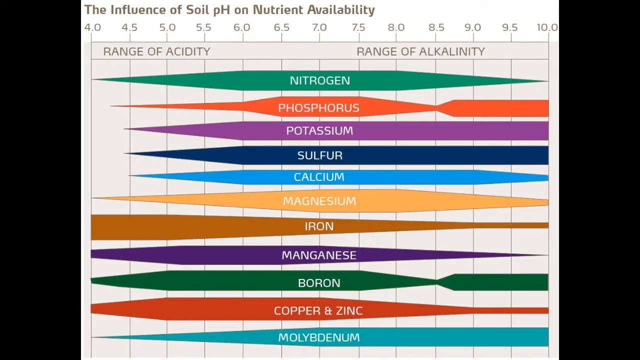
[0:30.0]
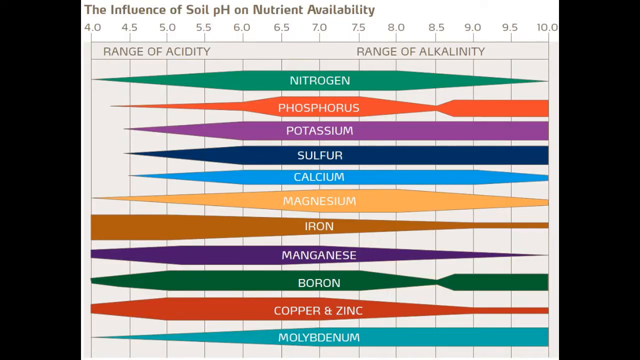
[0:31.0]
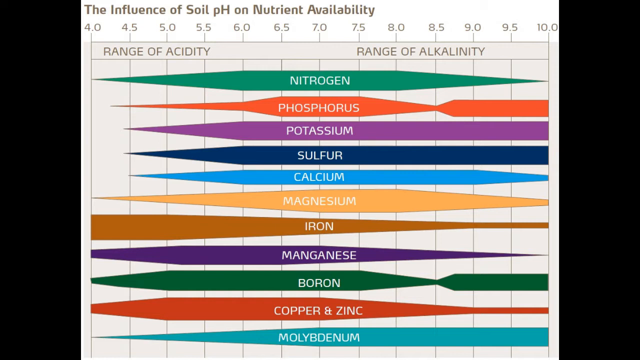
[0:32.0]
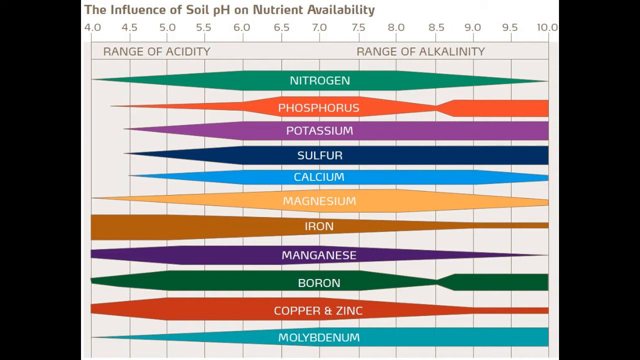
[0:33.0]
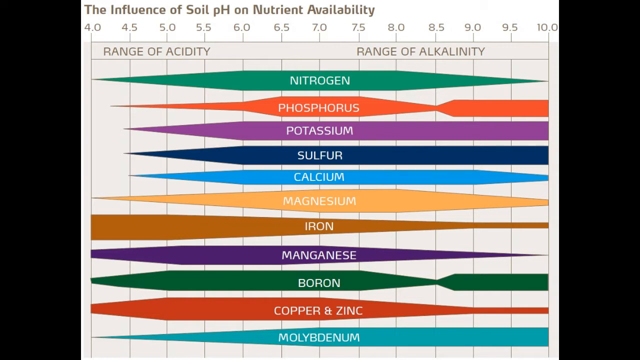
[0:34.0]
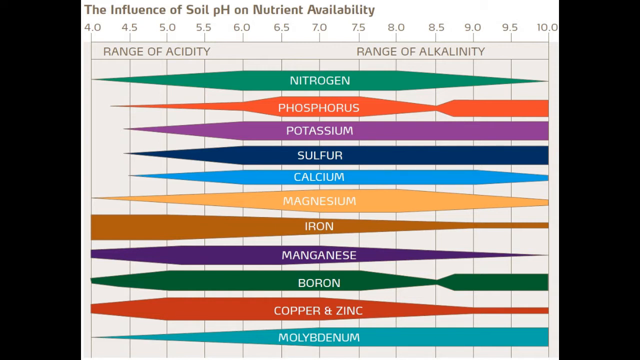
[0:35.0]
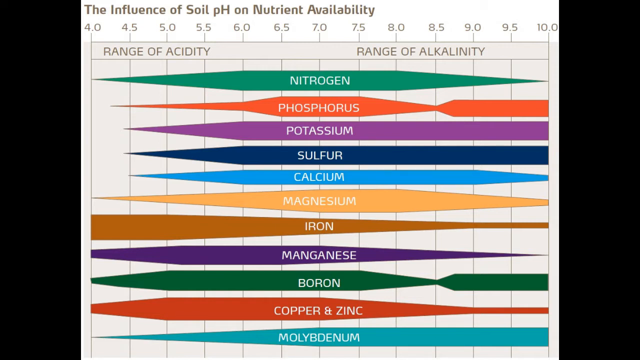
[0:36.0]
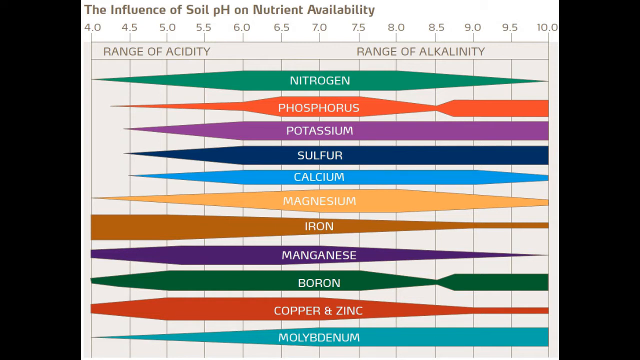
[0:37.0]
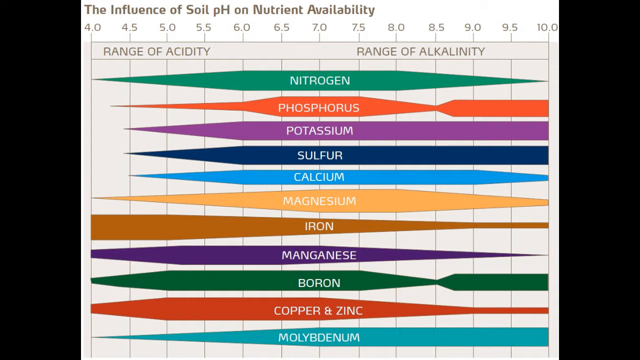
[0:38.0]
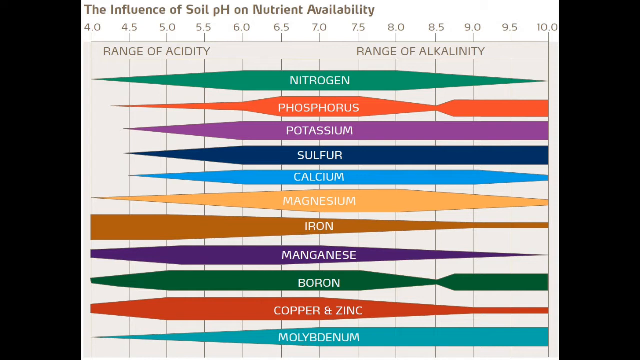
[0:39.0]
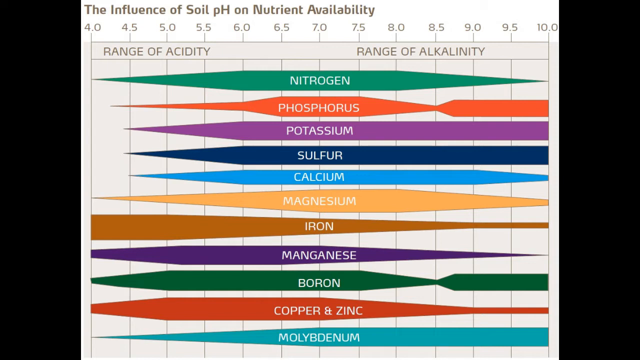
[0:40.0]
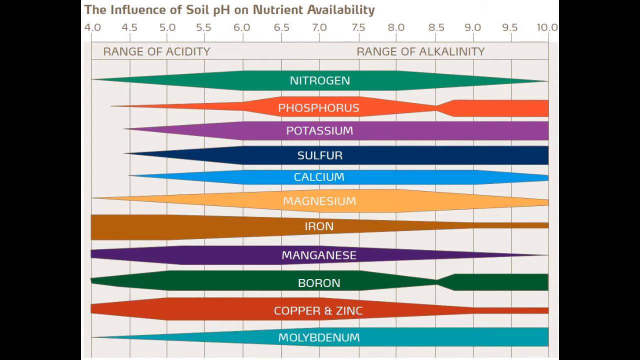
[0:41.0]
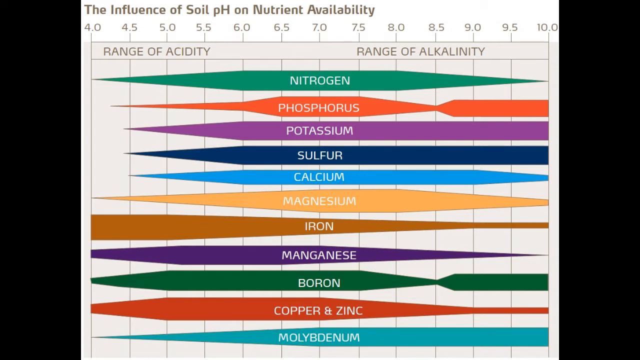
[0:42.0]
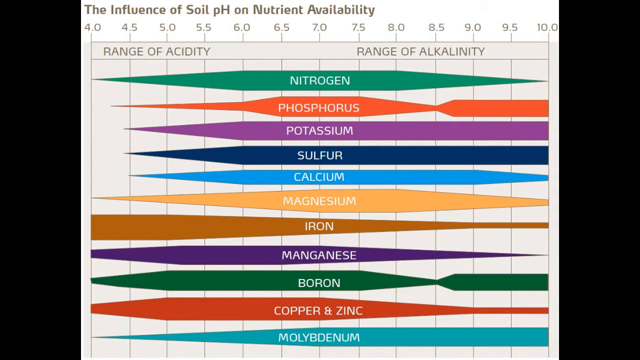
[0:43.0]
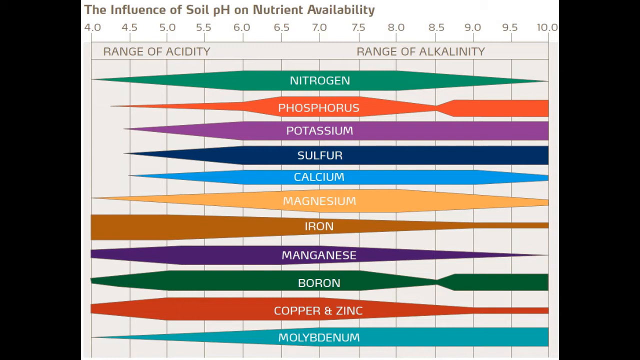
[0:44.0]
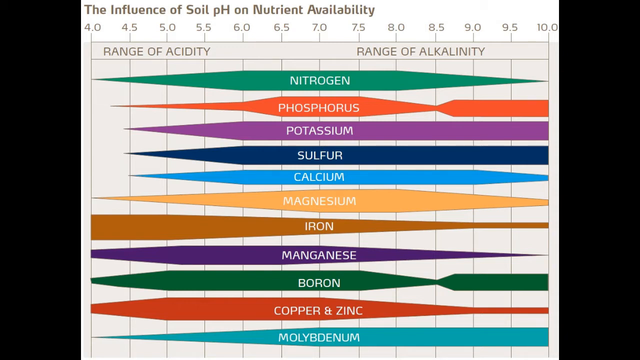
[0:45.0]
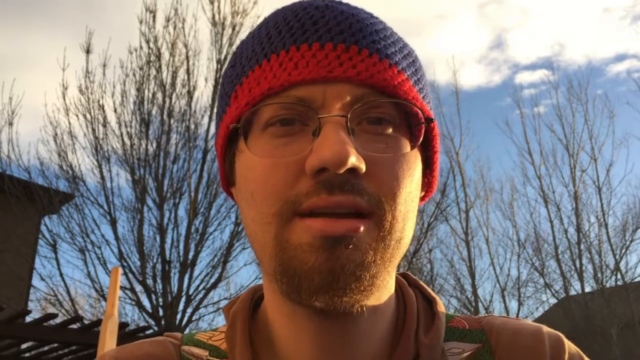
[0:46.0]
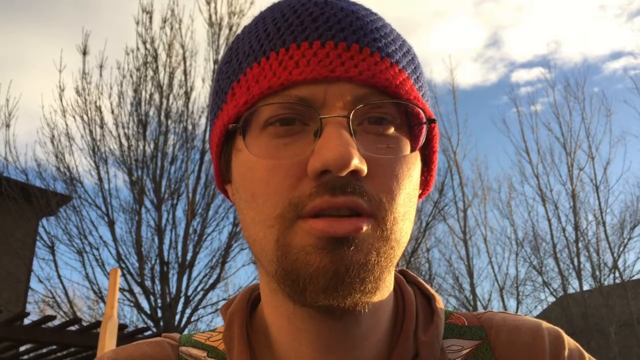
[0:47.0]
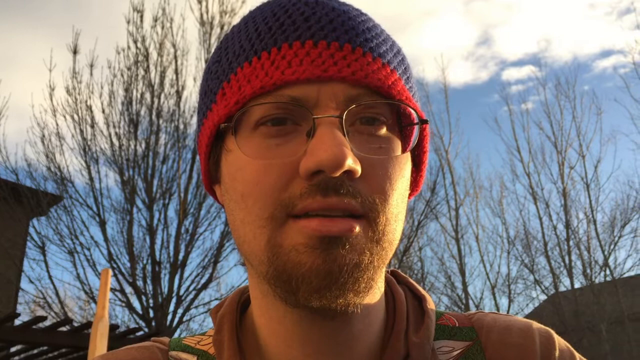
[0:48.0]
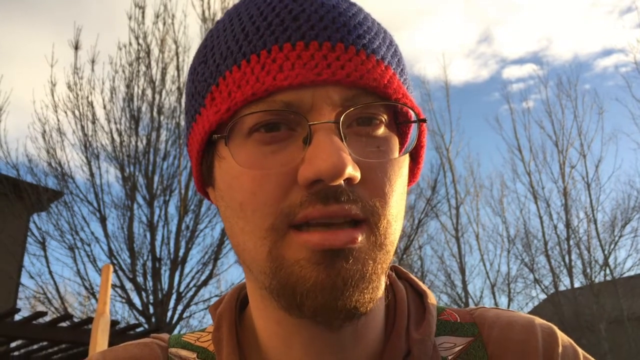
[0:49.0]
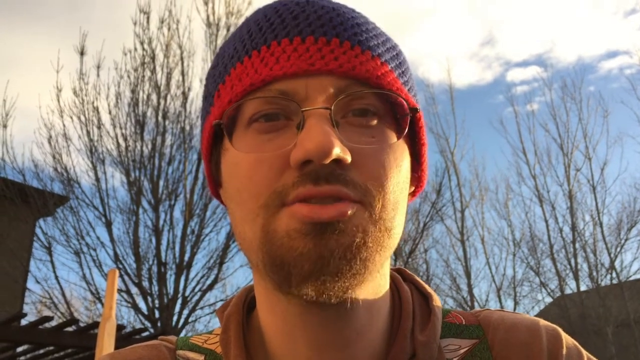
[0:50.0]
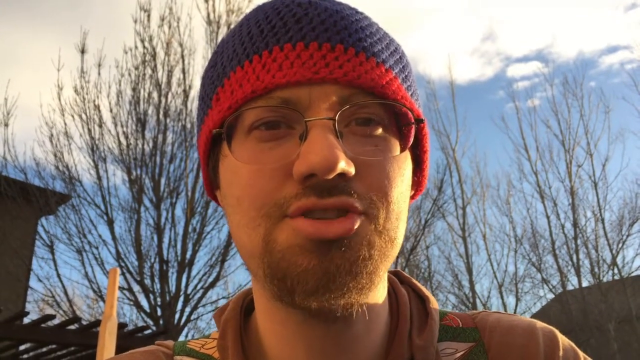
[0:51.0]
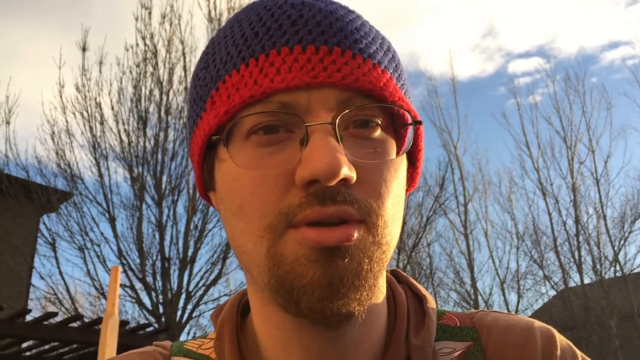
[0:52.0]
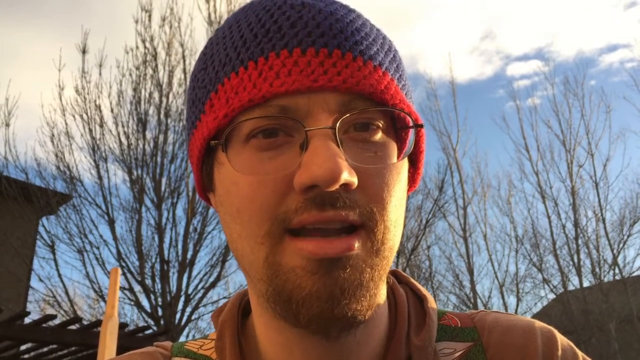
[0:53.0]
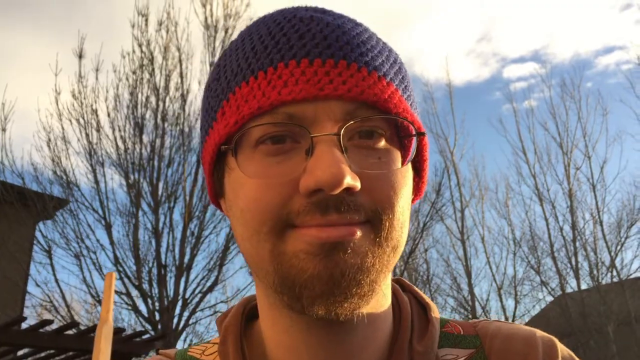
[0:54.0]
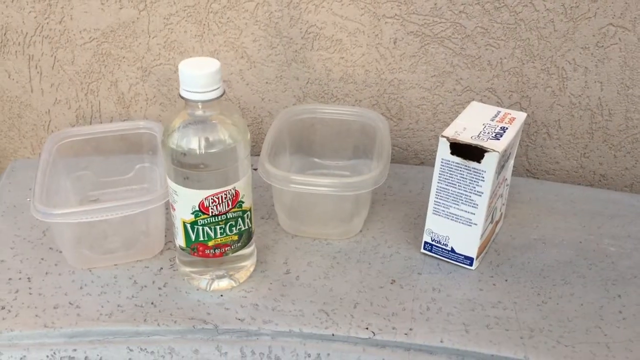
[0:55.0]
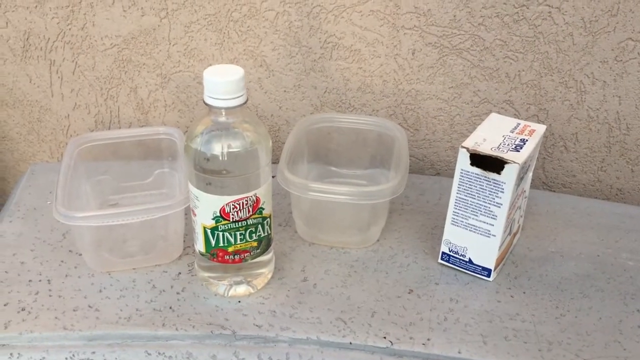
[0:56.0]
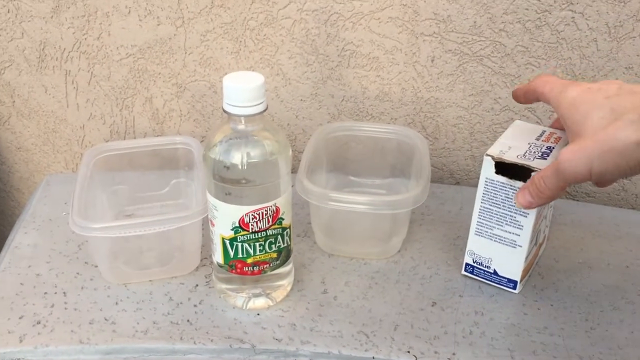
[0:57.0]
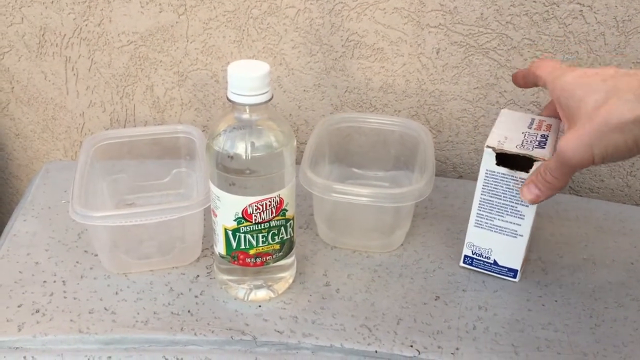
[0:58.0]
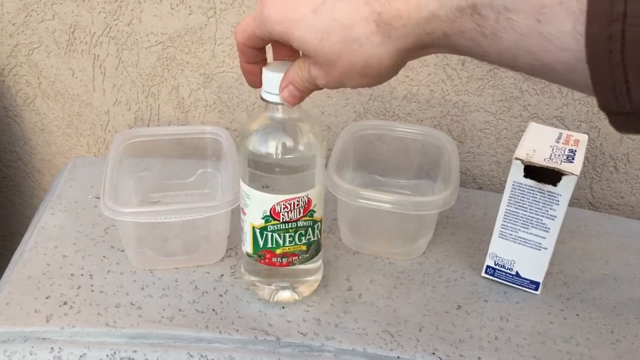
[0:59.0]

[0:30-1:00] A chart says "range of acidity" on the left and "range of alkalinity" on the right. Below are listed nitrogen, phosphorus, potassium, sulfur, calcium, magnesium, iron, manganese, boron, copper and zinc. The chart is white, with vertical lines running across it from left to right, and numbers along the top run from 4.0 at the left to 10.0 at the right. The view switches back to the man in the beanie, glasses and brown coat, who starts talking. Then a tabletop that looks like marble appears. Two plastic tubs are on it, with a container of vinegar labeled "vinegar" between them and a box of baking soda to the right. A right hand comes in from the right of the screen, touches the box of baking soda, and then picks up the jar of vinegar.